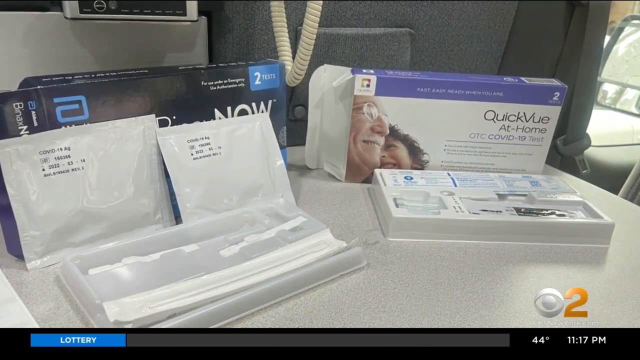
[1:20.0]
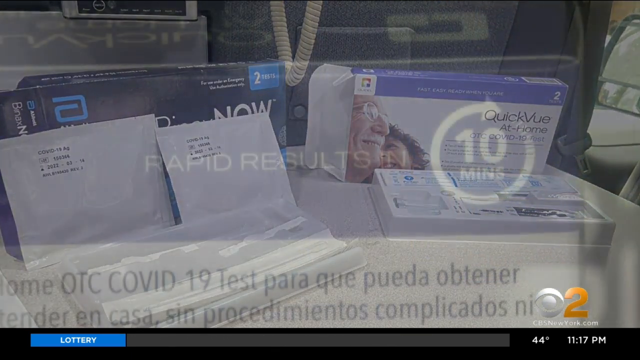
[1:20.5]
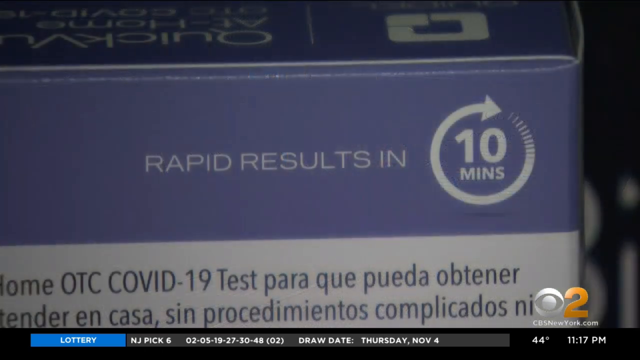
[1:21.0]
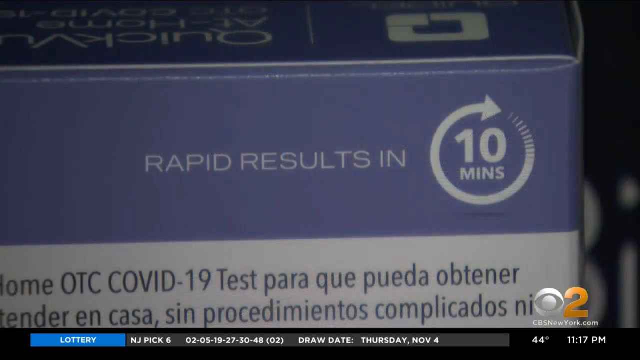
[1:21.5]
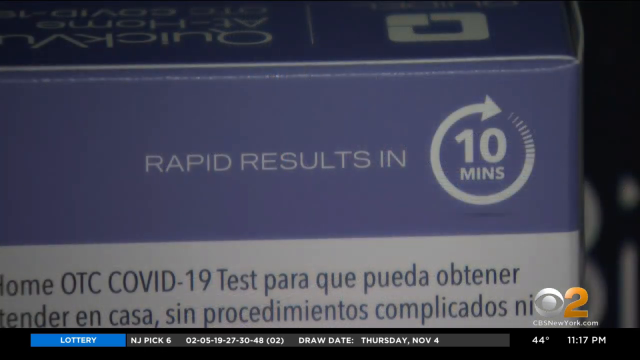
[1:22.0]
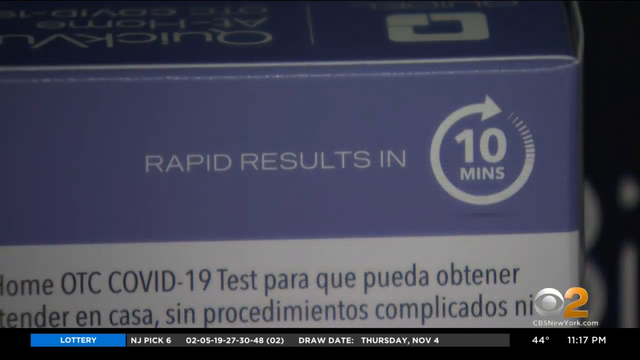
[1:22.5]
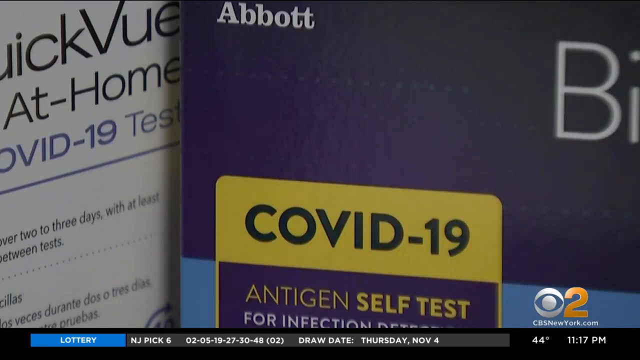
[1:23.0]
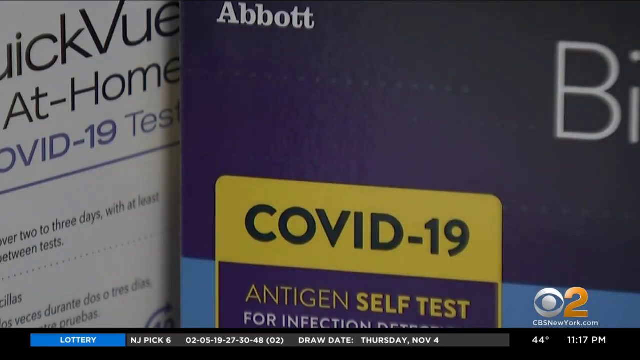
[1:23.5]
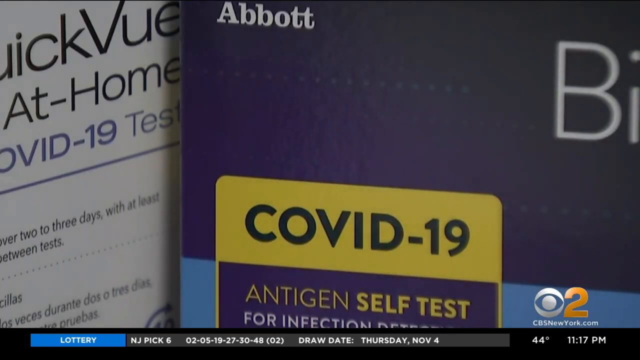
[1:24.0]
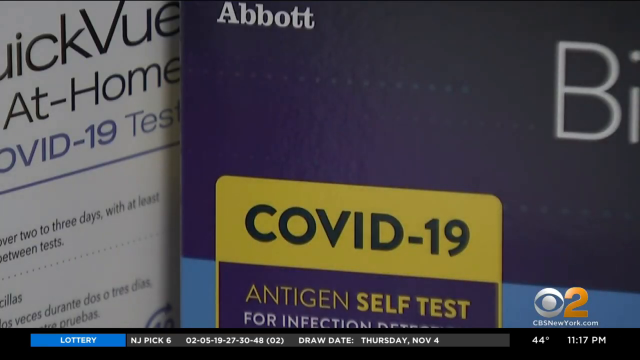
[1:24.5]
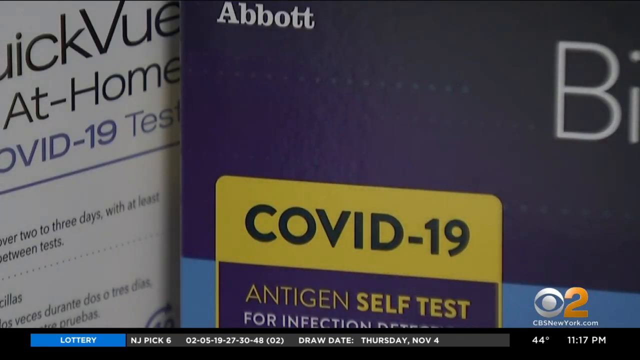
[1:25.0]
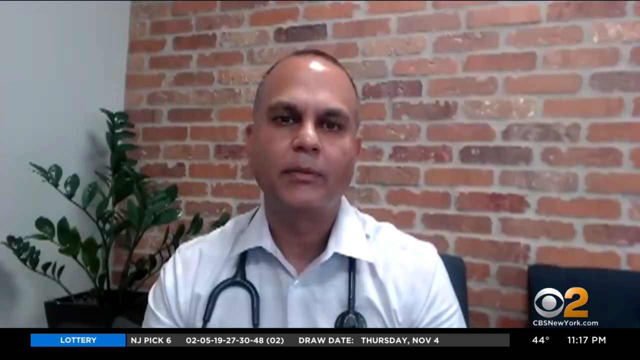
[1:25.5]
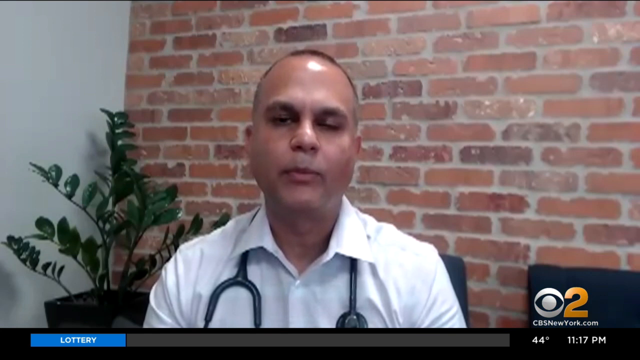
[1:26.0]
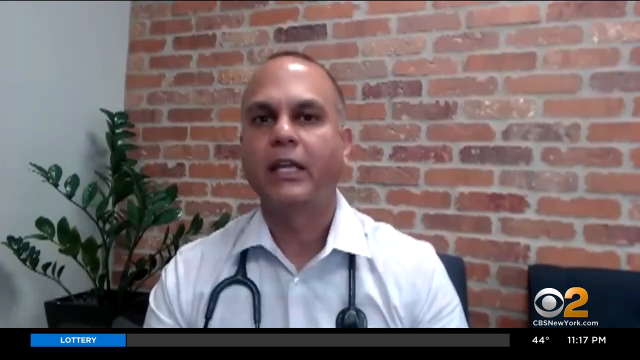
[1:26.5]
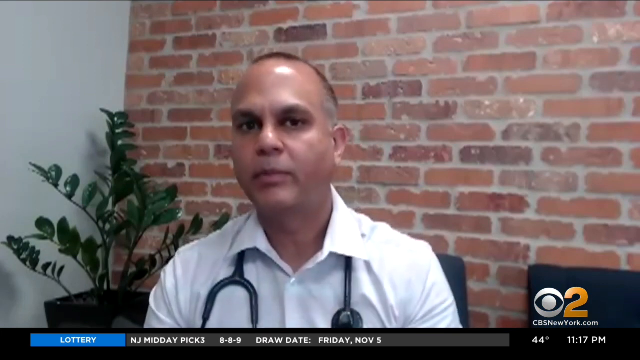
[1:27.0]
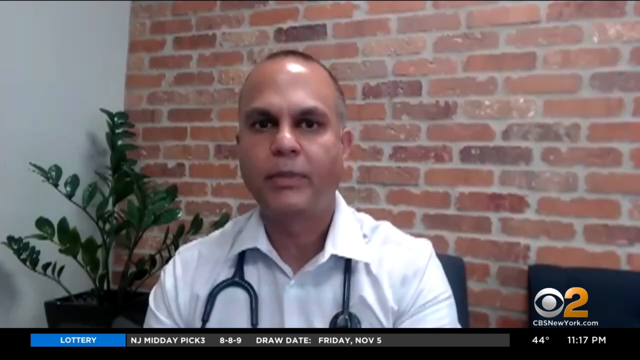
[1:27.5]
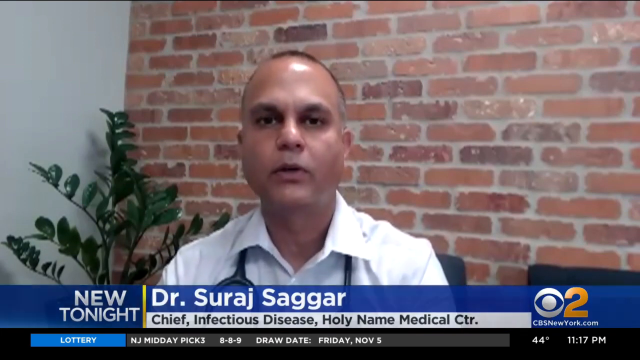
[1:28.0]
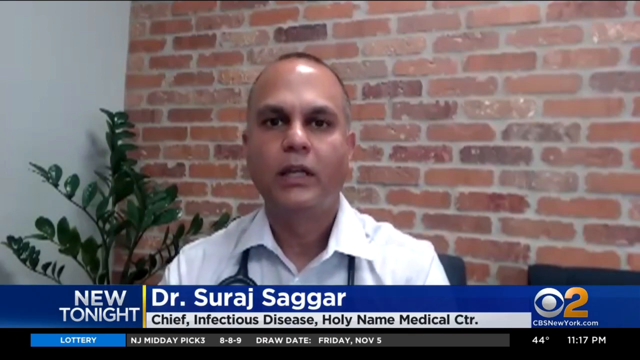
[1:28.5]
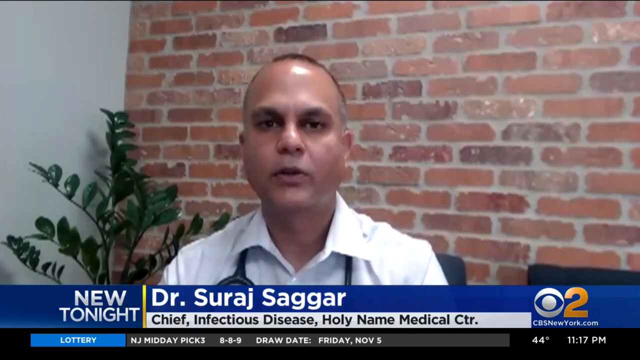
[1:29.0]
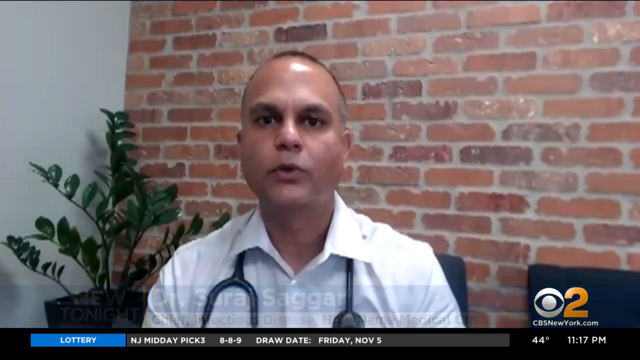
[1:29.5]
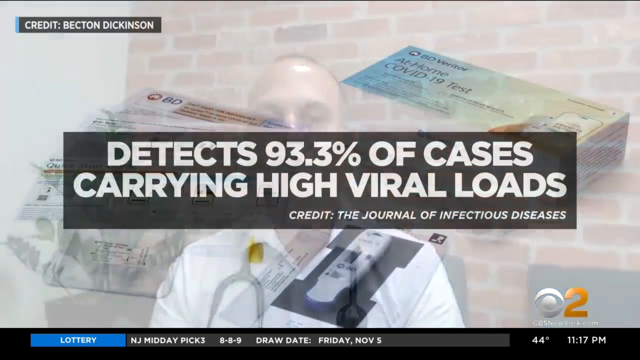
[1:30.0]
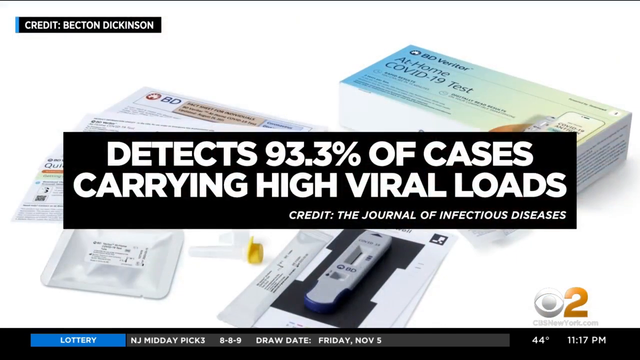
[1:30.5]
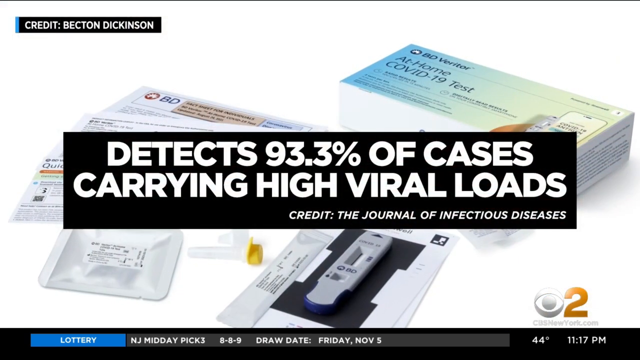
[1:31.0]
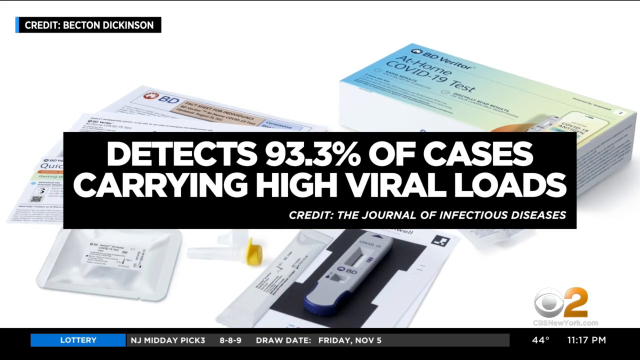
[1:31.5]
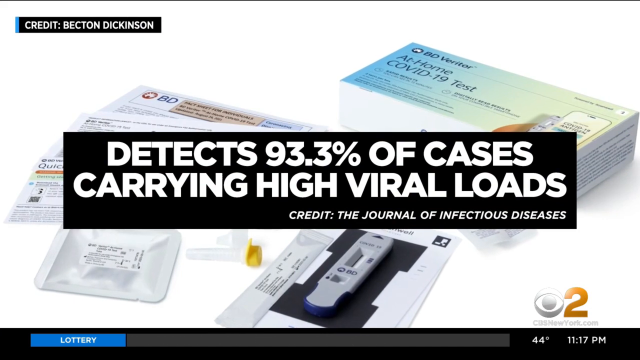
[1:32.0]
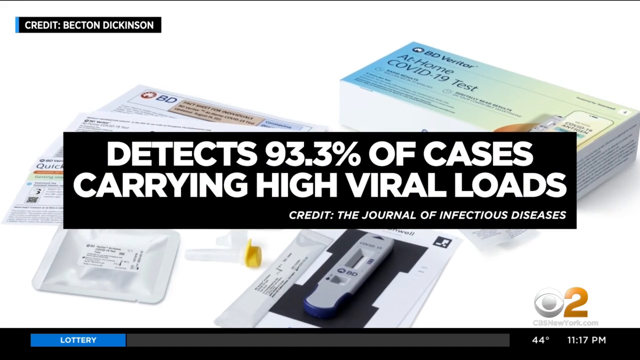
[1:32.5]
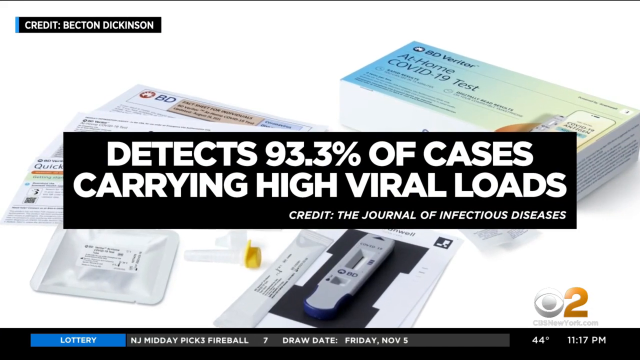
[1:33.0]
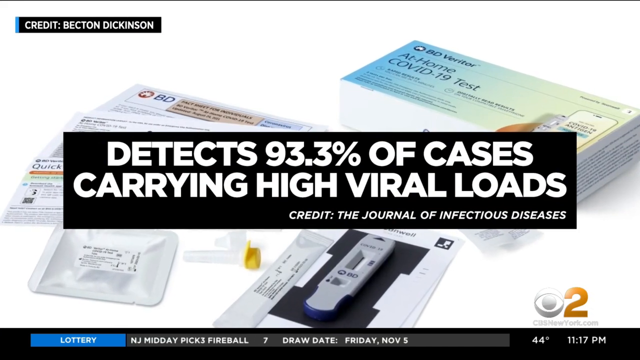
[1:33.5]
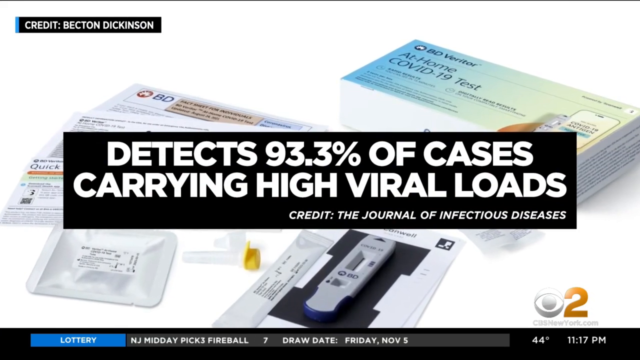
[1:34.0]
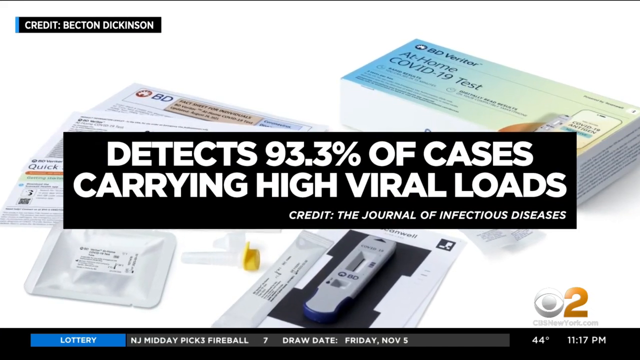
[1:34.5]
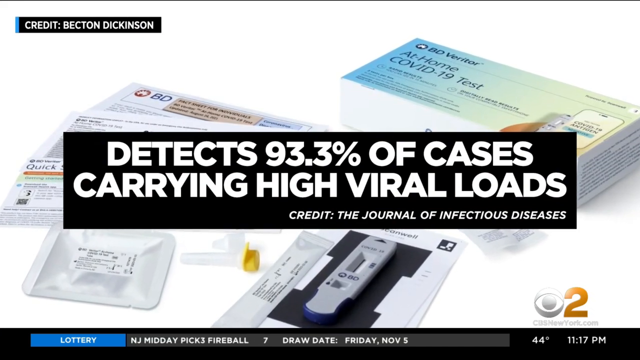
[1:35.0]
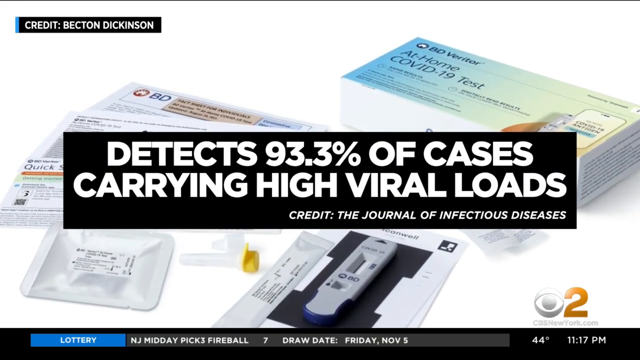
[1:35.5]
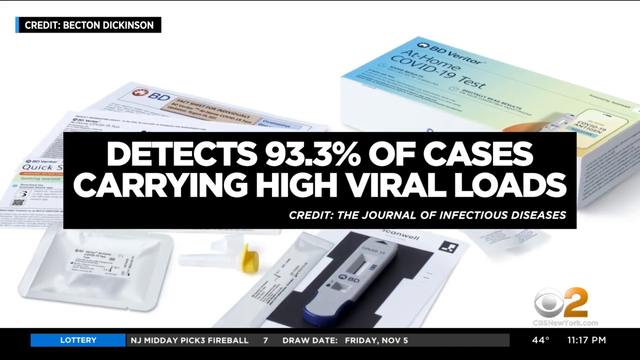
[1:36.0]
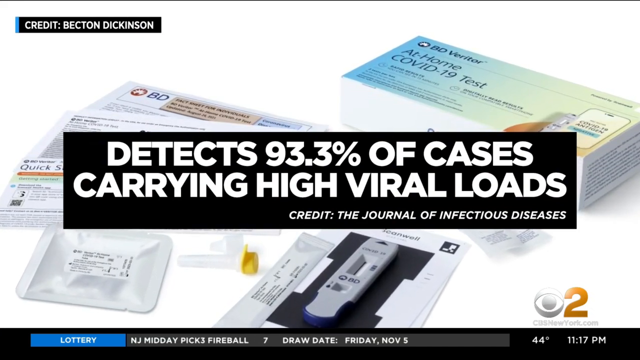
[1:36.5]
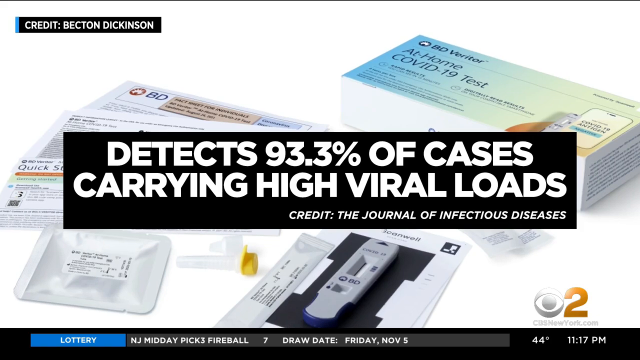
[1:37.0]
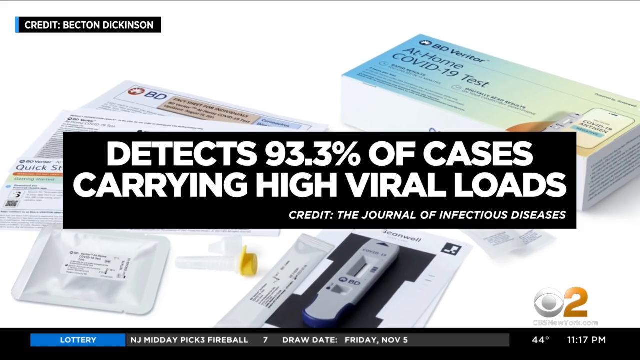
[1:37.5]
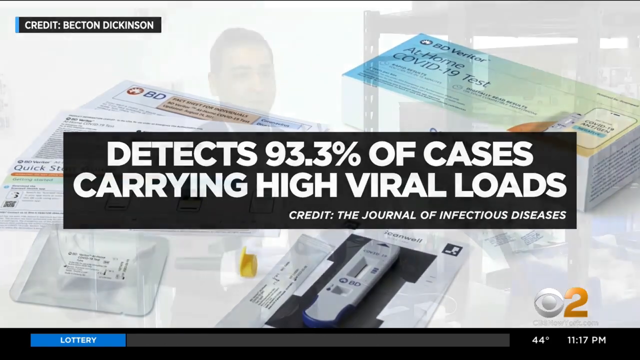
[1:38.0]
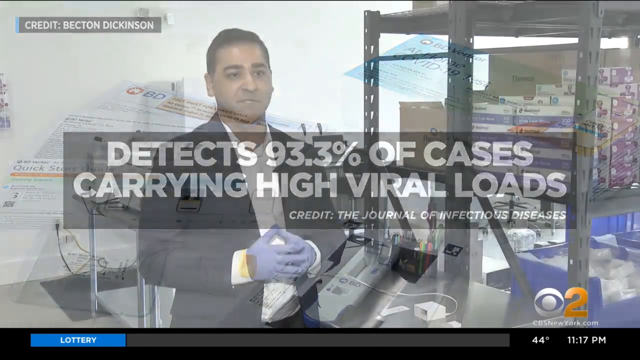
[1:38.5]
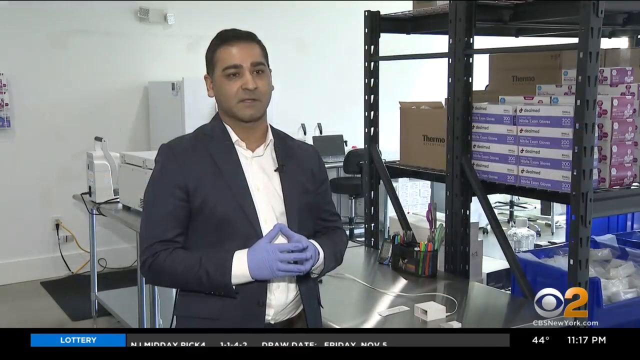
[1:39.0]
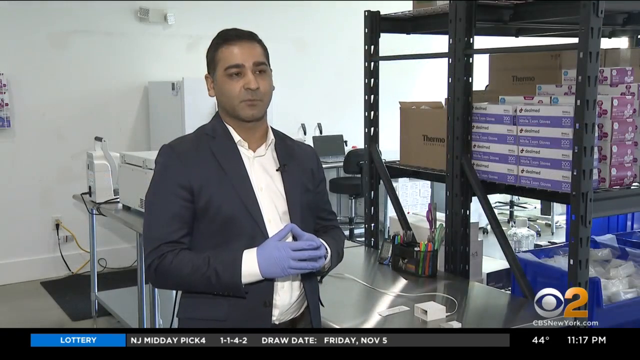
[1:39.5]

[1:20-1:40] The COVID tests are shown up close, both types of tests. The video then goes to a man talking to viewers who appears to be a doctor. He wears a white collared shirt with a stethoscope around his neck, has short hair, and is sitting inside a room with a brick wall behind him, a white wall to his left, and a plant in the corner. Next, a screen reads "detects 93.3% of cases carrying high viral loads" and "Credit of the Journal of Infectious Diseases," with more COVID-19 tests behind the banner. One box says "BD Verriter at-home COVID-19 tests" and has been opened to show what comes inside. The video then goes to a different man talking in front of a shelf full of boxes of gloves; he wears blue gloves on his hands.